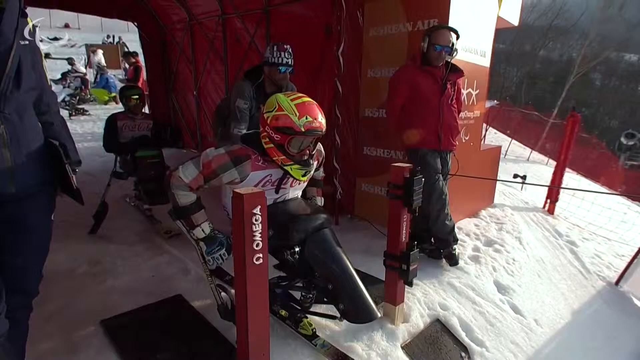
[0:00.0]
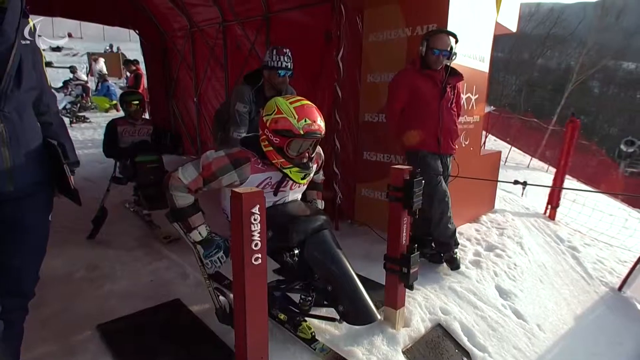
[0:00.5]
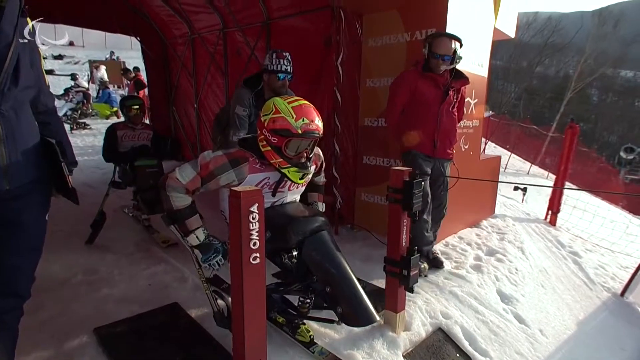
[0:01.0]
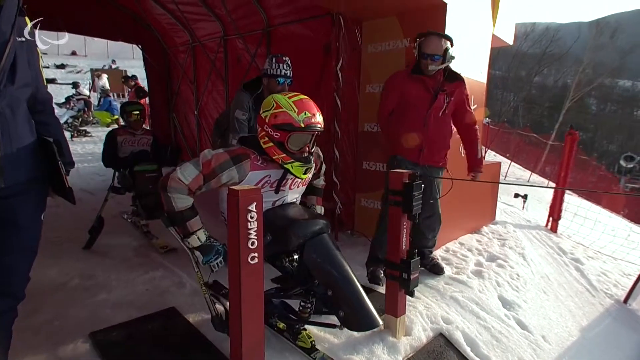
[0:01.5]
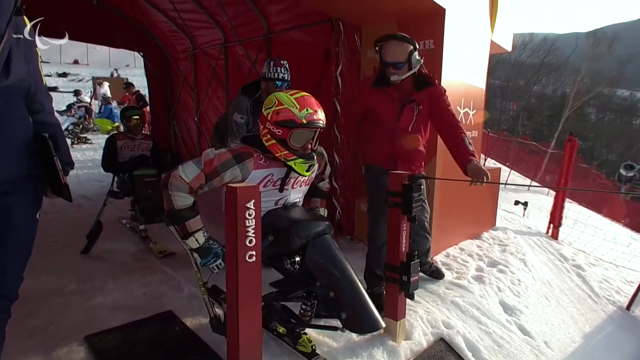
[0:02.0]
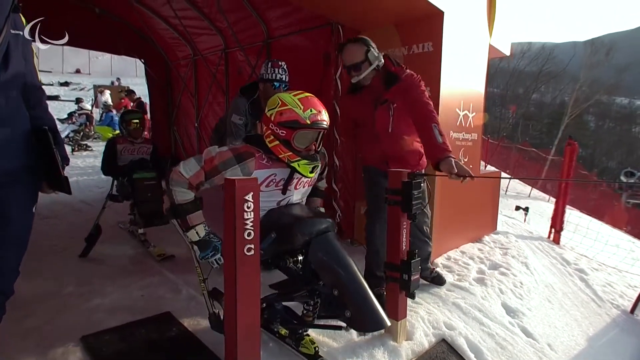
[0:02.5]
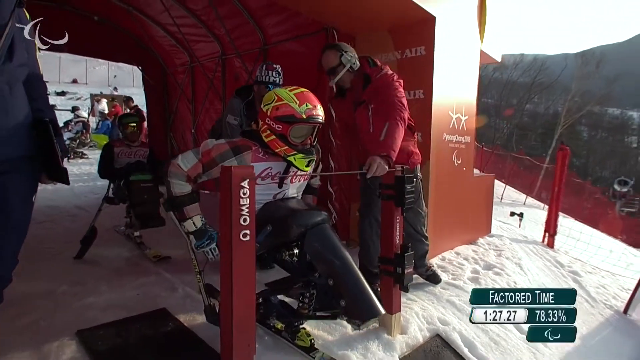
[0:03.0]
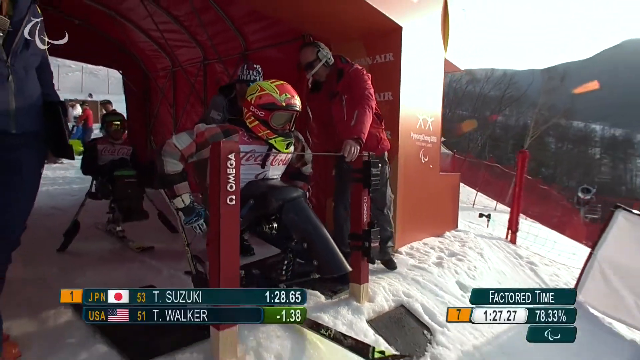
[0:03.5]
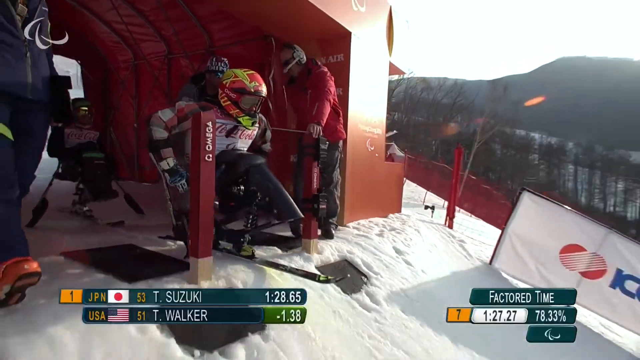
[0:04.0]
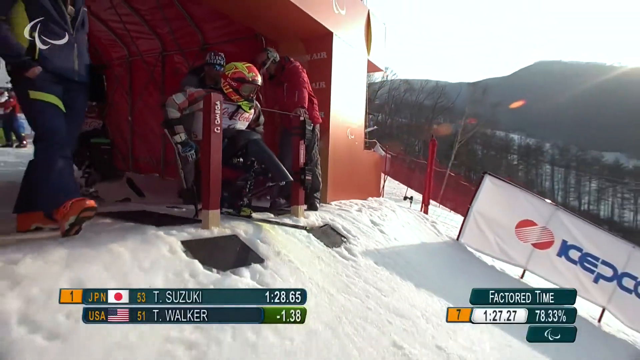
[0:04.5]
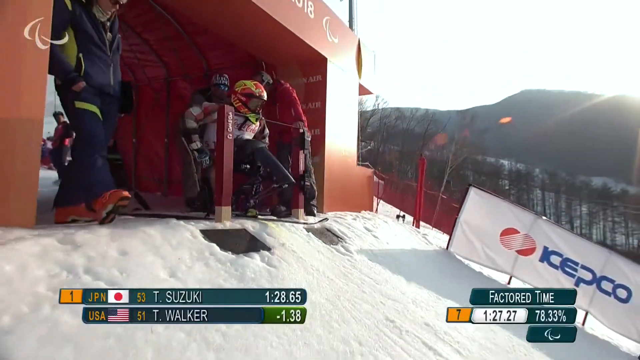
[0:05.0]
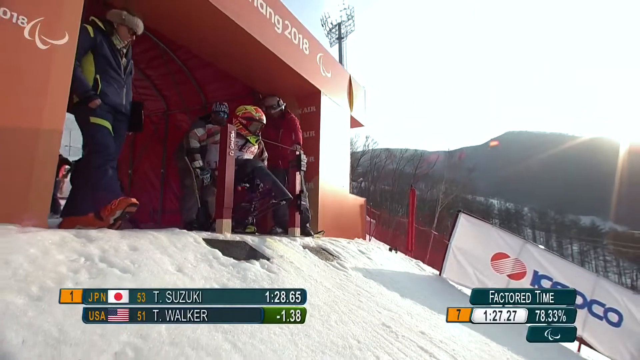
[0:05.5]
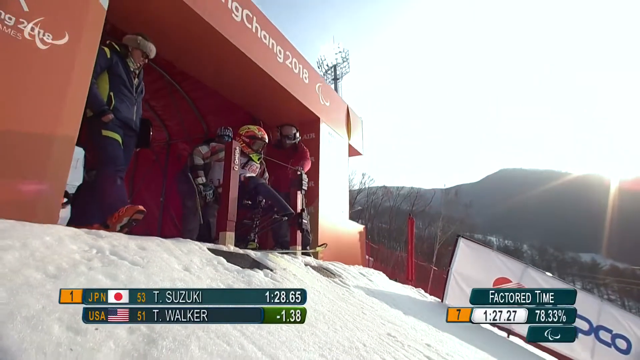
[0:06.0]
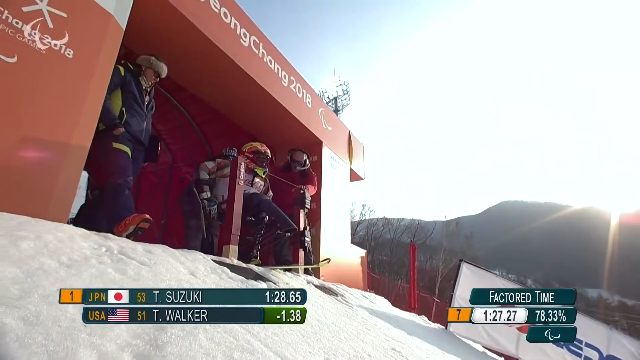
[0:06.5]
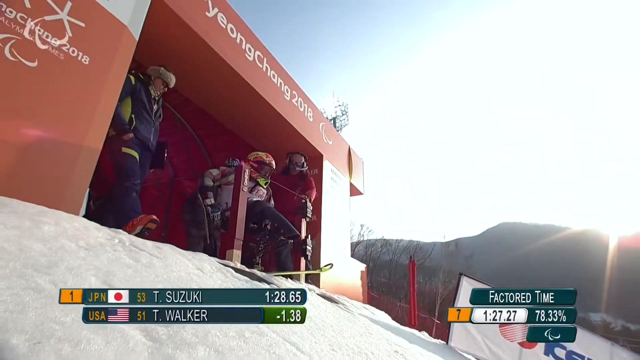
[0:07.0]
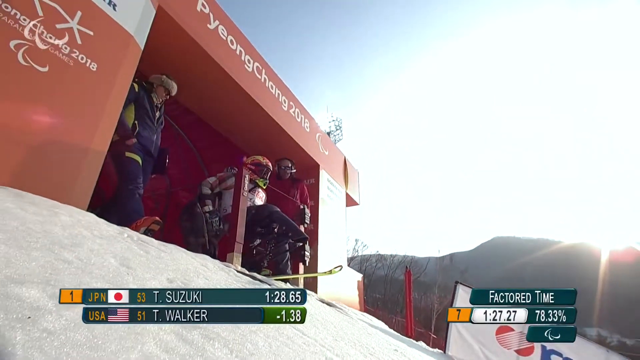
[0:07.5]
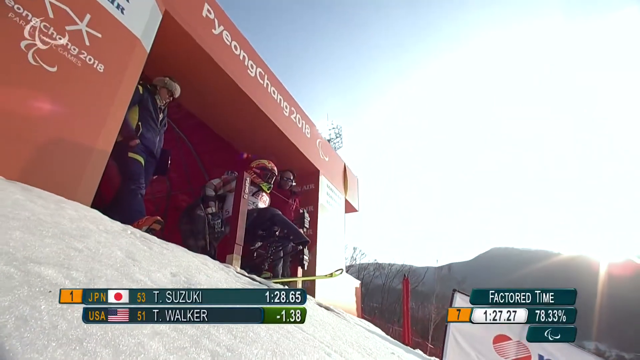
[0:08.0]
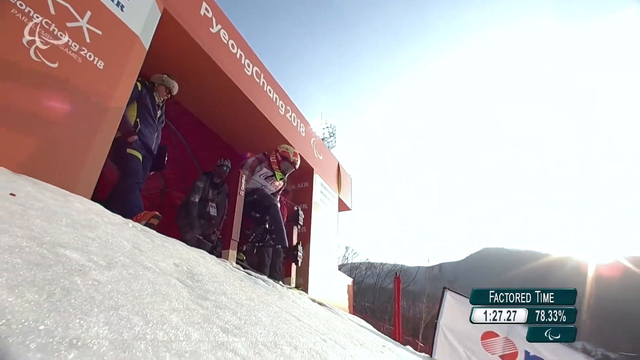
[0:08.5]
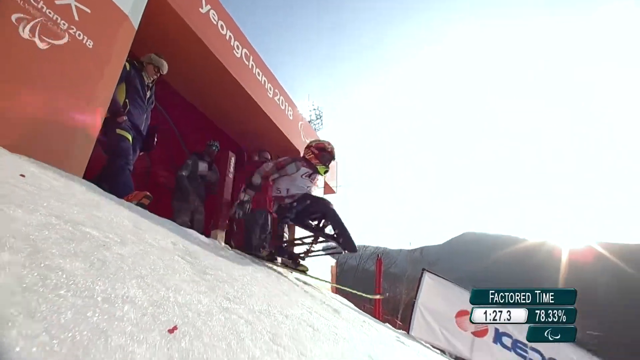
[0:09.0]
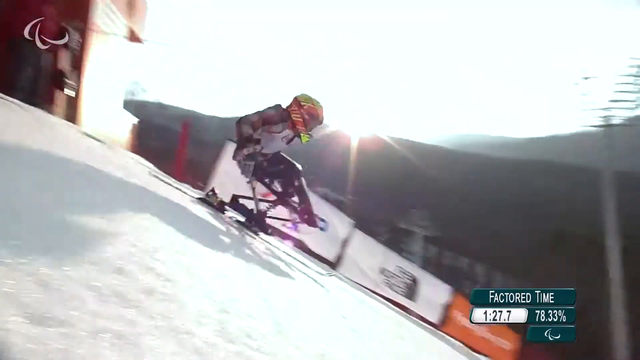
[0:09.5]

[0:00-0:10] Winter sports are shown: people are at the top of a snowy hill like a ski slope, seated on skis, possibly in the Paralympics. A man wearing headphones and sunglasses is standing by, watching. The first person in line wears a bright pink and yellow helmet and a vest that says "Coca-Cola"; they wait at the starting point. The standing man closes a sensor in front of them. A score on screen gives the riders' names and their countries, Japan and USA, with their times. The camera pans down as the Paralympian goes through the sensor and starts downhill.